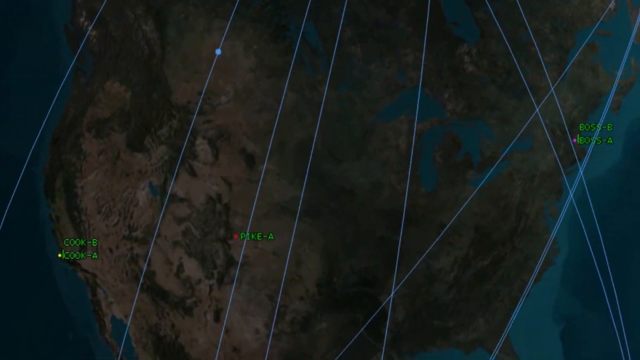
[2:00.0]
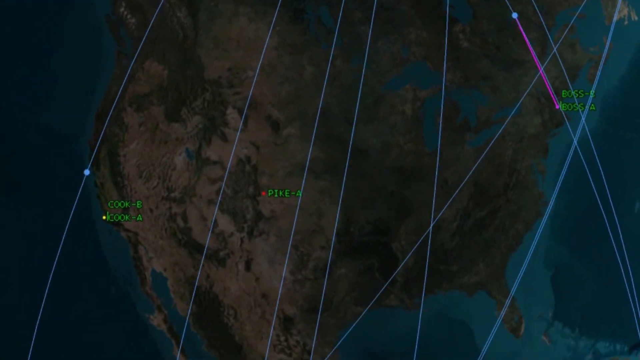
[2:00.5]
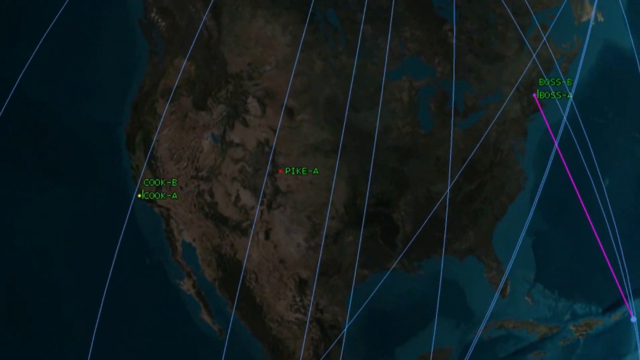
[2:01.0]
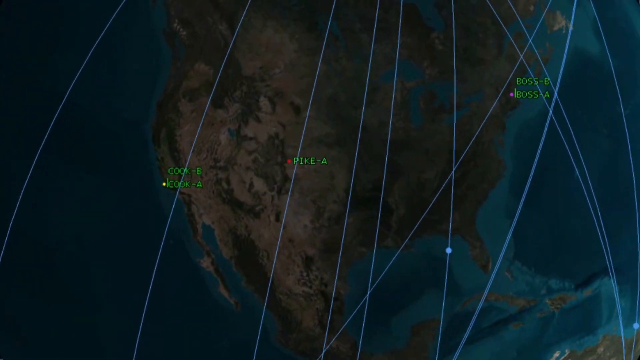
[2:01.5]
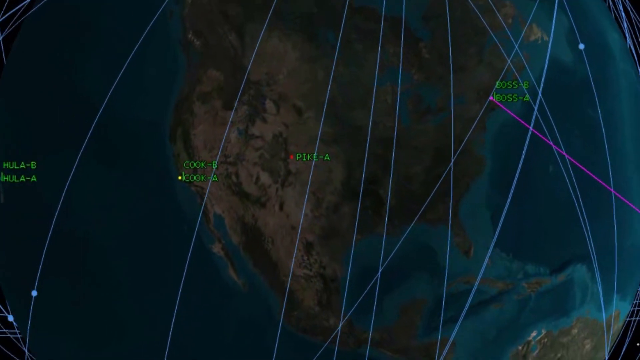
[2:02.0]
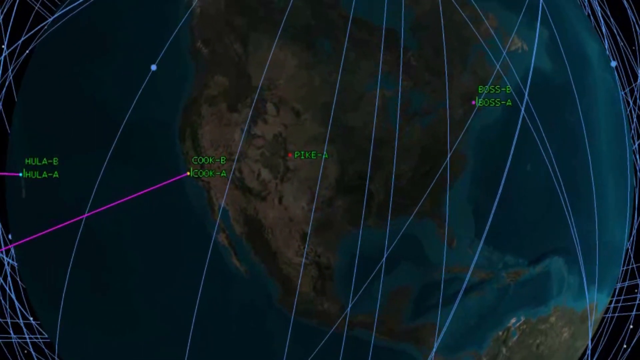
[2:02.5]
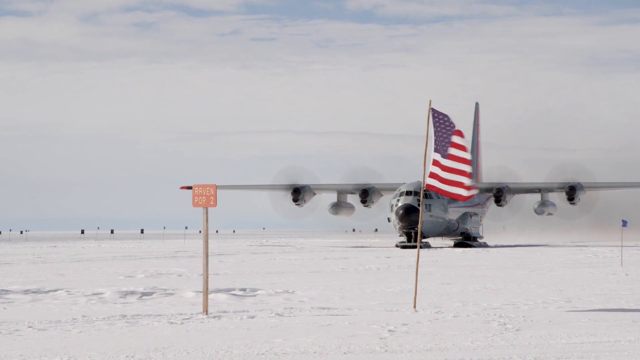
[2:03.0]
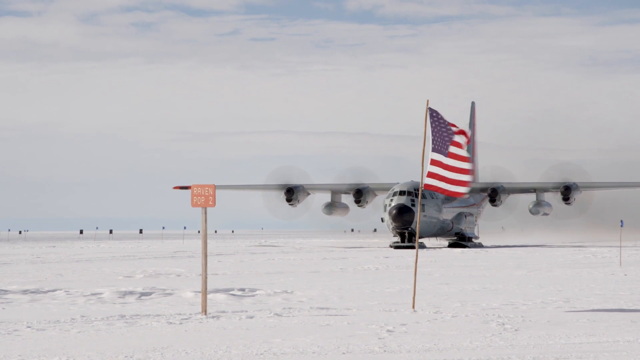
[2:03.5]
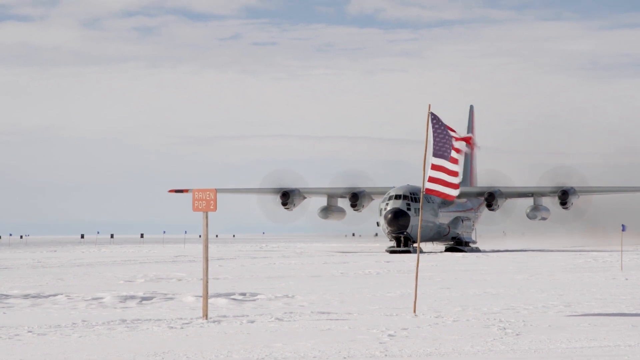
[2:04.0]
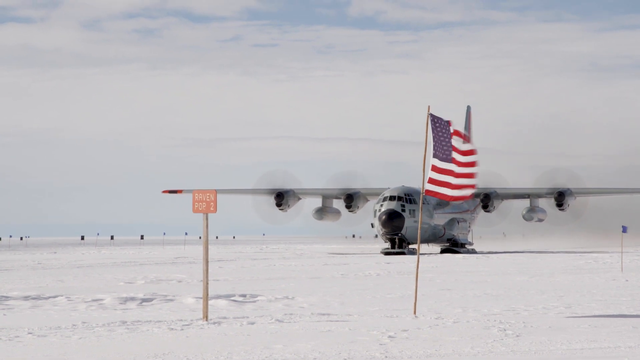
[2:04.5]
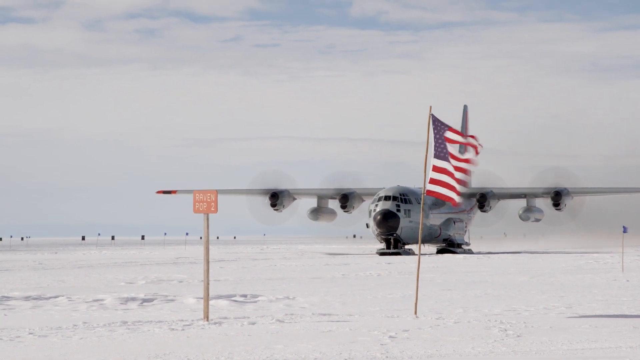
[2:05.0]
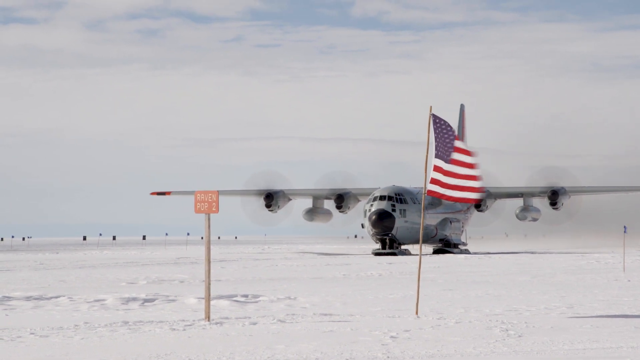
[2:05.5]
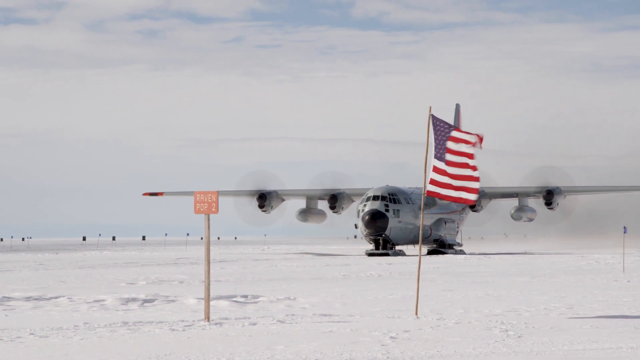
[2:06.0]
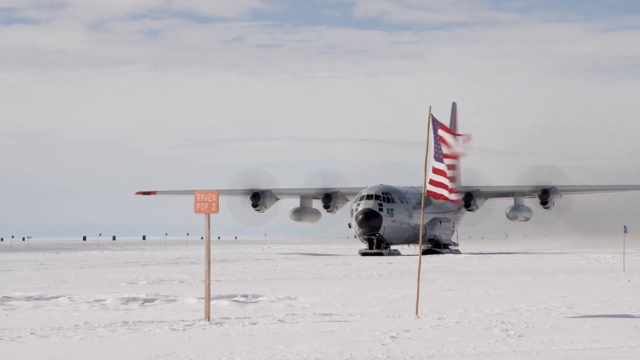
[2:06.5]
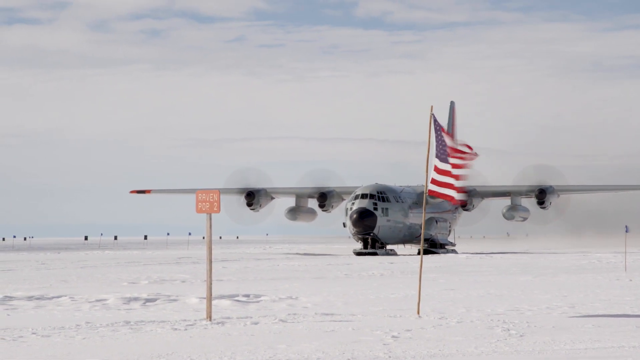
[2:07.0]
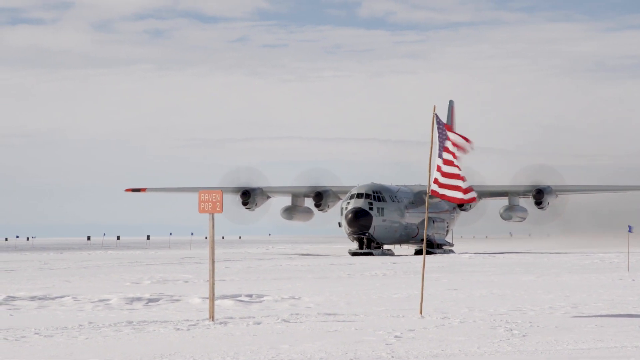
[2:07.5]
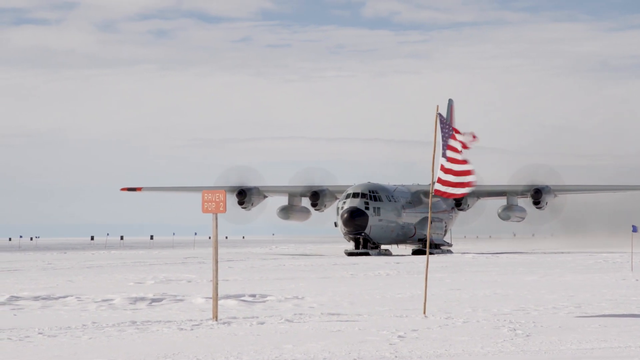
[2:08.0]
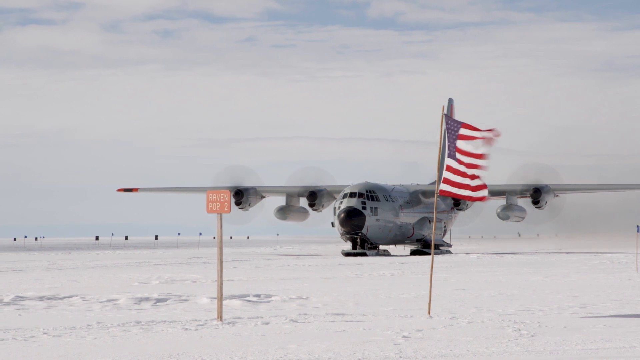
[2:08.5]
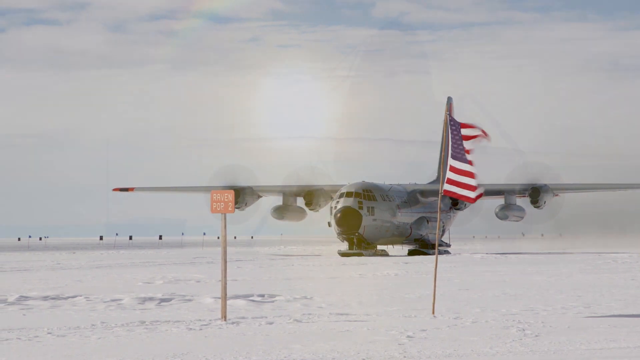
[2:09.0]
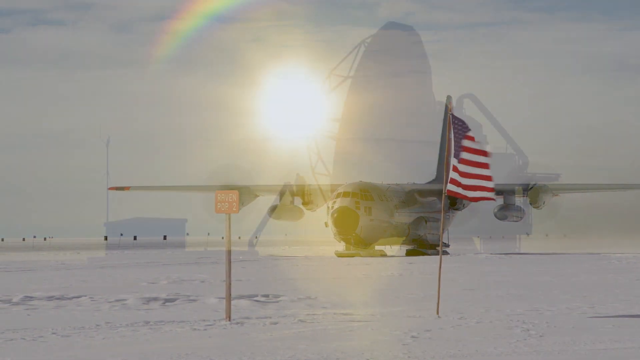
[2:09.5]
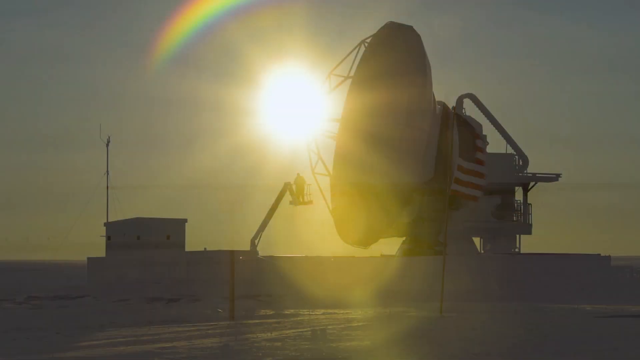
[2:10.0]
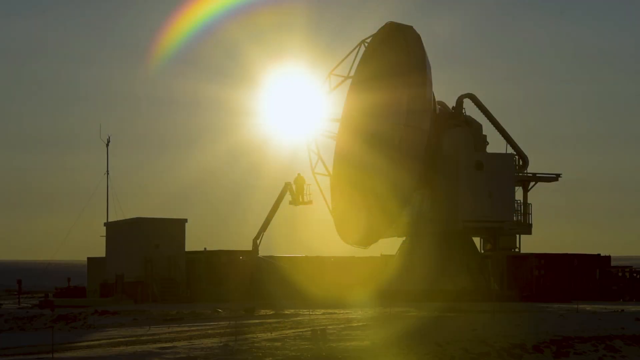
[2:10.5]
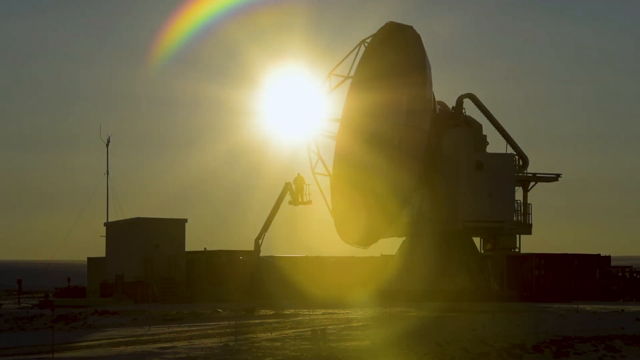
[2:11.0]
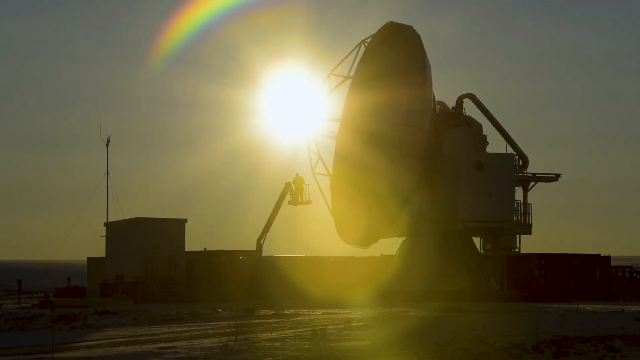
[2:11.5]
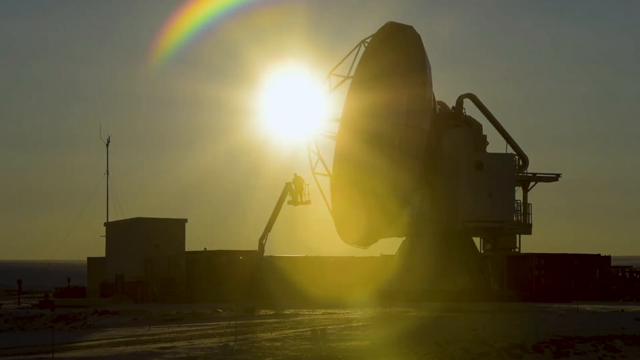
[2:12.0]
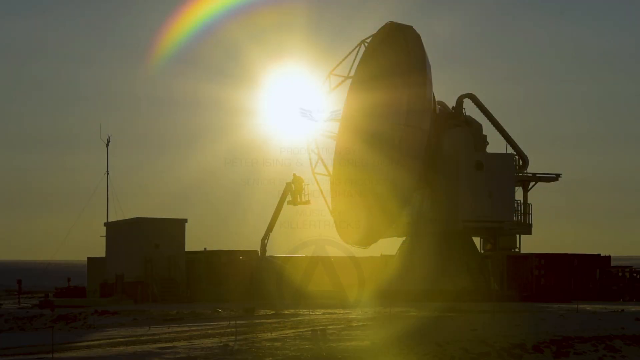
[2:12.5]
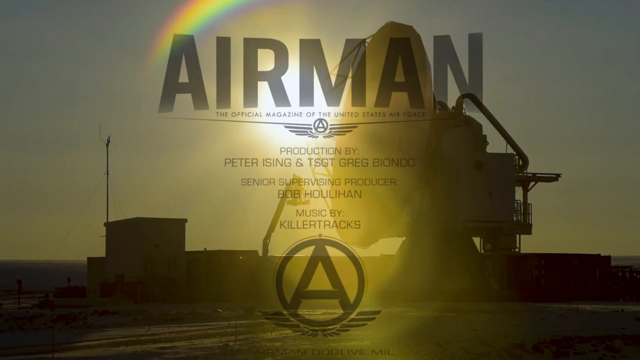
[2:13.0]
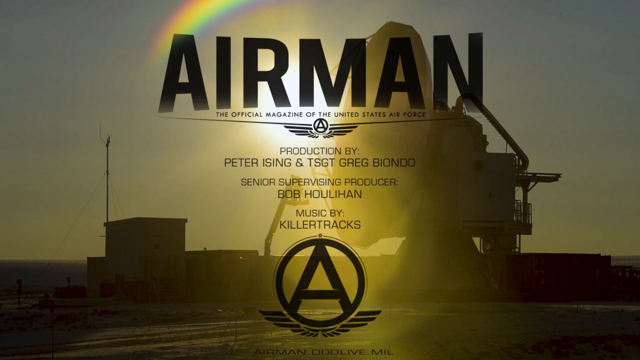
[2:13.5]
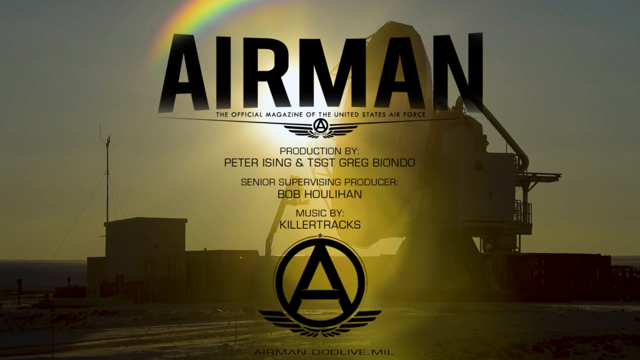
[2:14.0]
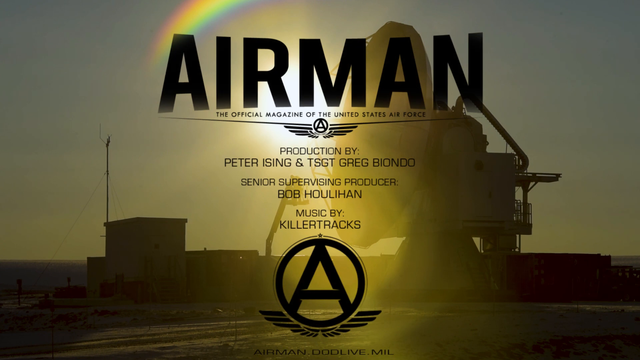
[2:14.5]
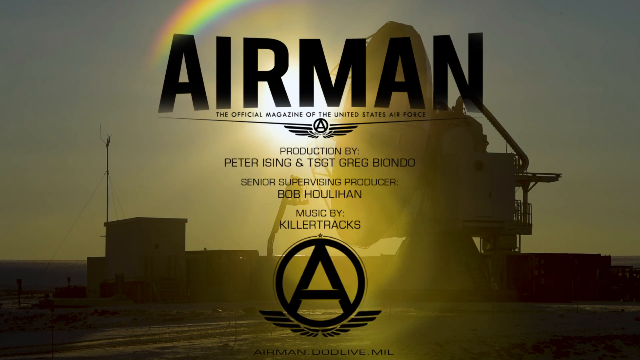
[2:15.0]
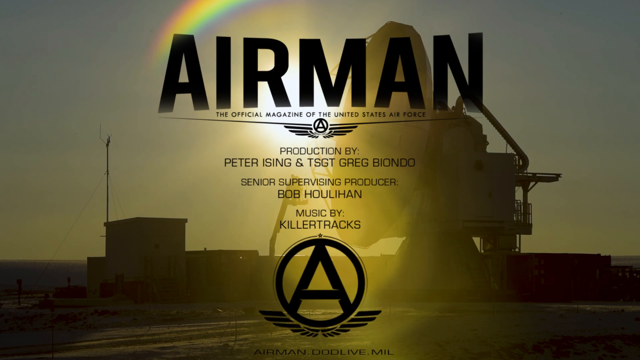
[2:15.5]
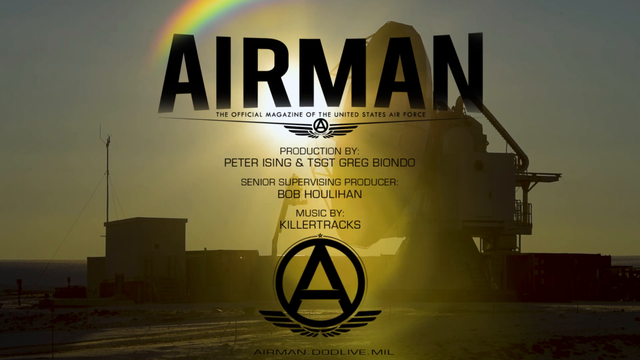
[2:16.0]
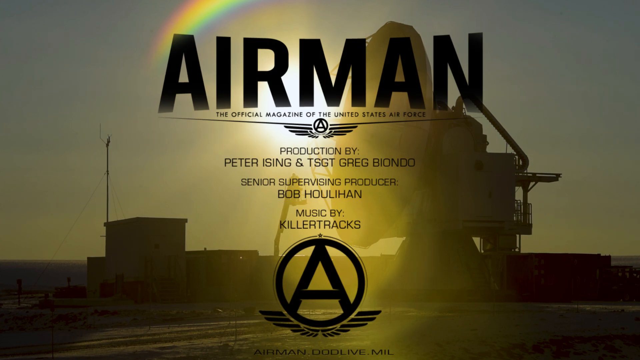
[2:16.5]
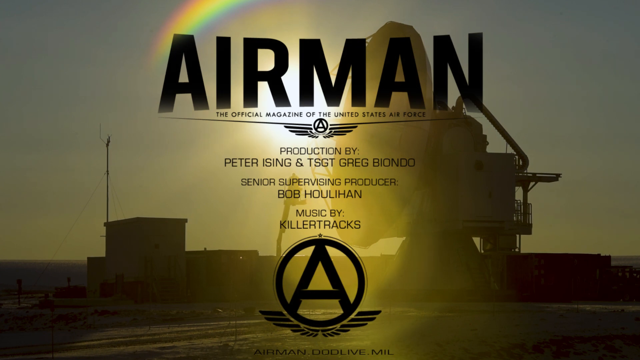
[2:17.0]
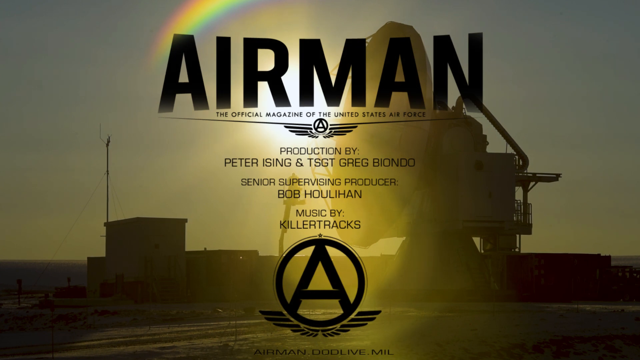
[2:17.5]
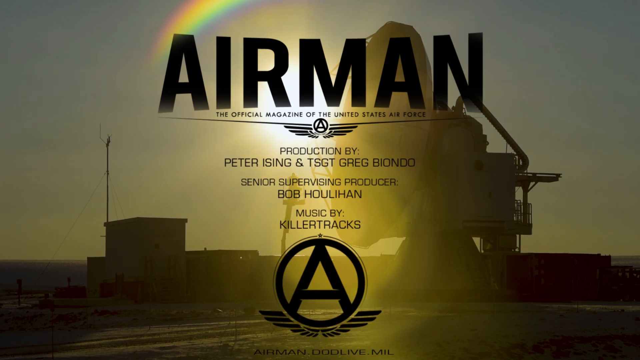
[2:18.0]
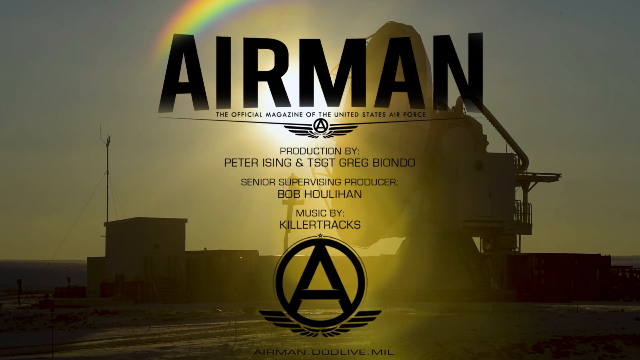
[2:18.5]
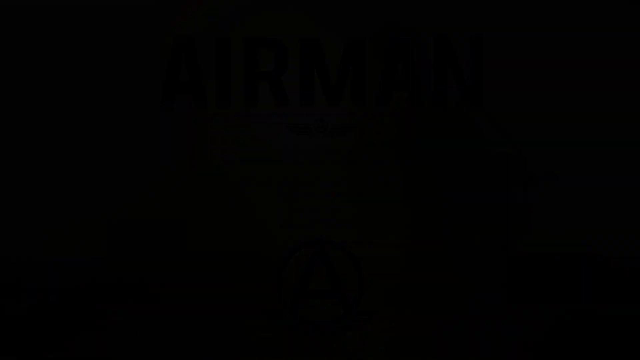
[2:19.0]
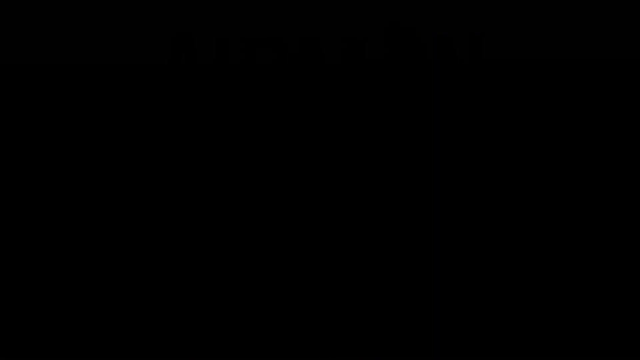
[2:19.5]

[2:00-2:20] As the molecule-like object gets closer, it turns out to be a map of the world. The view zooms in on the United States, where coordinates are written in green text. The video then zooms out, showing lines across the globe that still have dots moving through them. Next, the large Boeing military plane moves across an icy, snowy landscape. An American flag is stuck in the snow in front of the plane, along with an orange sign on a wooden stick. The plane slowly moves forward on the tarmac, and another plane and another flag whipping fast in the wind are in the background. The airplane has no wheels but instead large skates to help it travel across the ice. Finally, the sun shines in front of a large satellite outdoors, with the Airman logo and production information for the video on top.